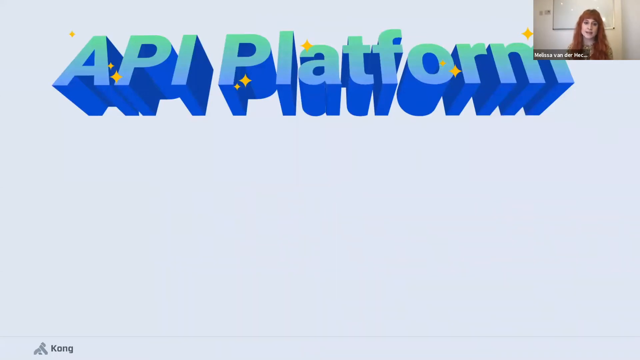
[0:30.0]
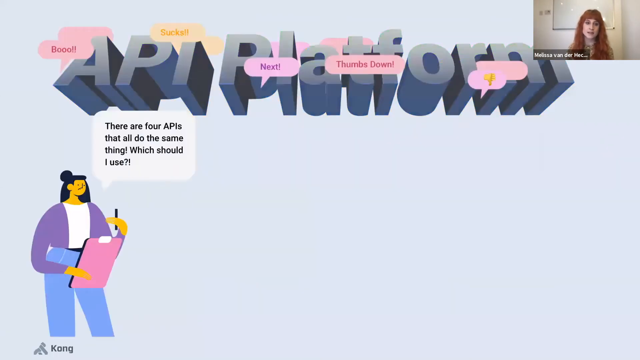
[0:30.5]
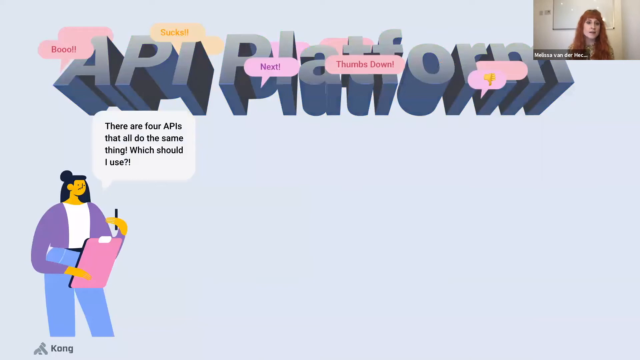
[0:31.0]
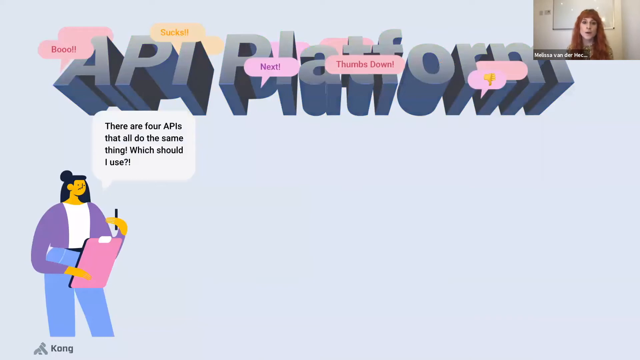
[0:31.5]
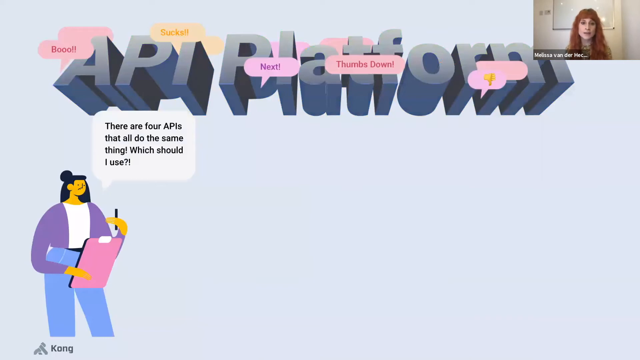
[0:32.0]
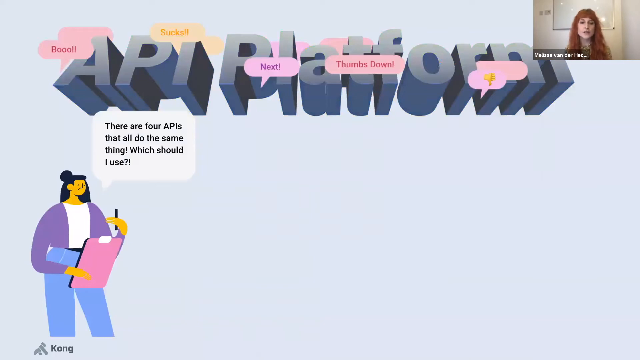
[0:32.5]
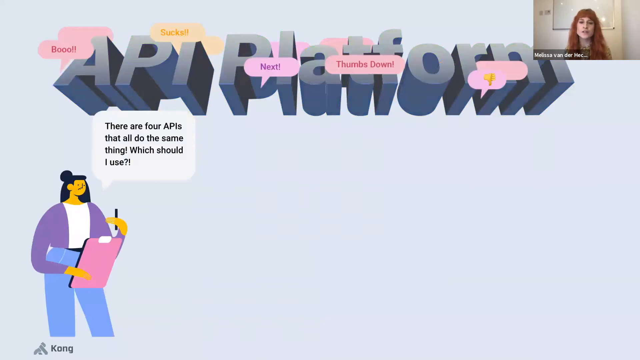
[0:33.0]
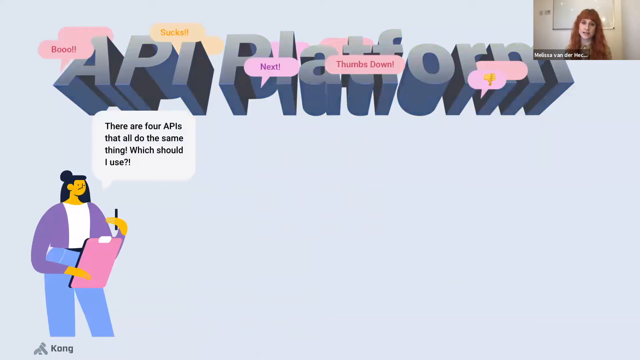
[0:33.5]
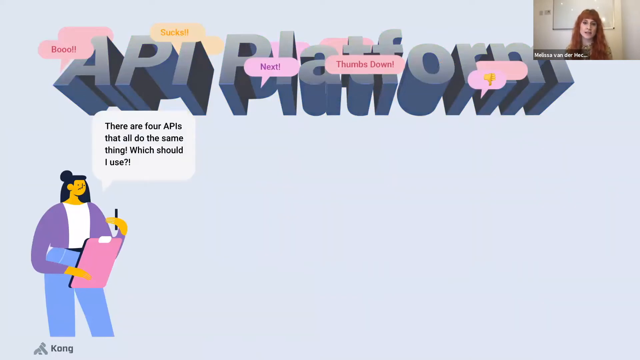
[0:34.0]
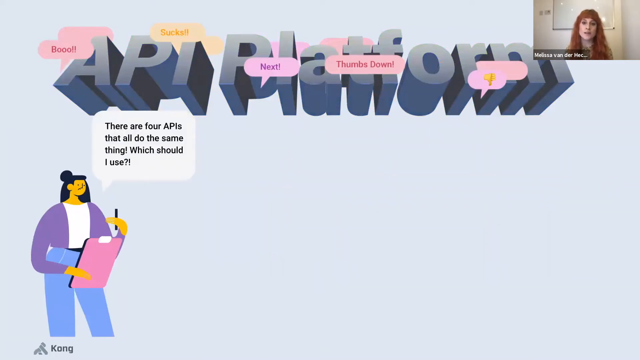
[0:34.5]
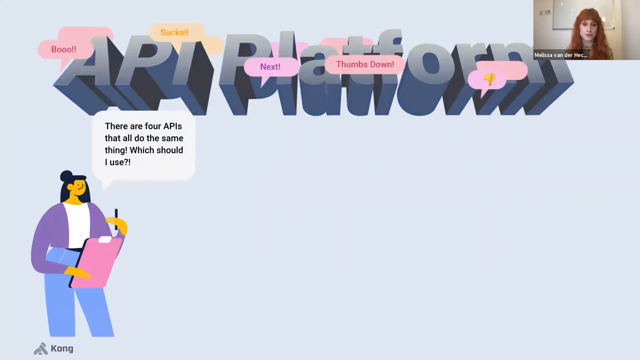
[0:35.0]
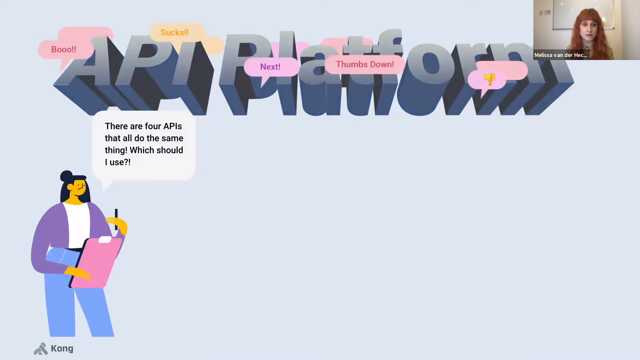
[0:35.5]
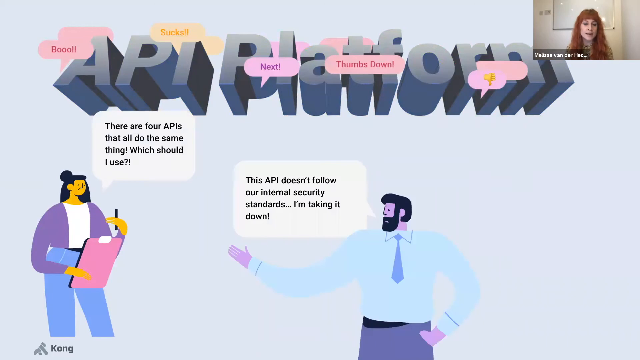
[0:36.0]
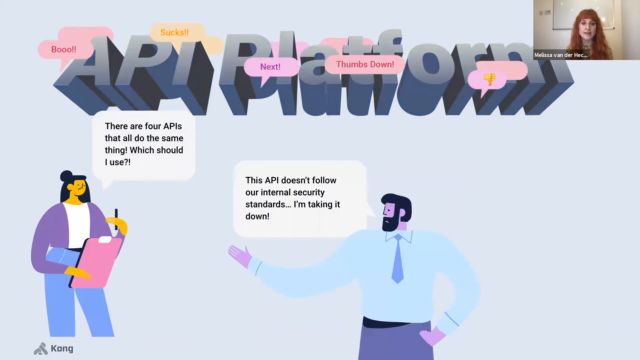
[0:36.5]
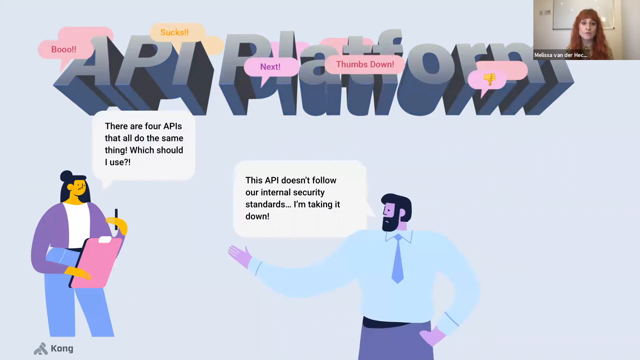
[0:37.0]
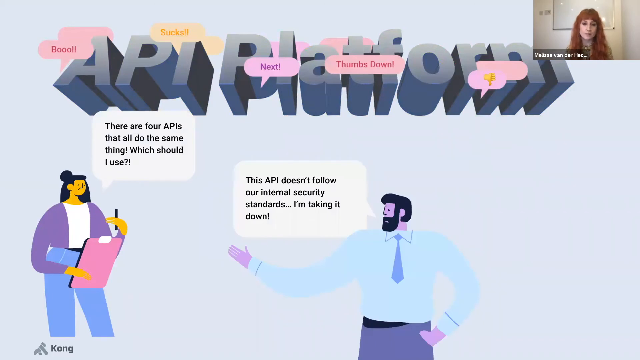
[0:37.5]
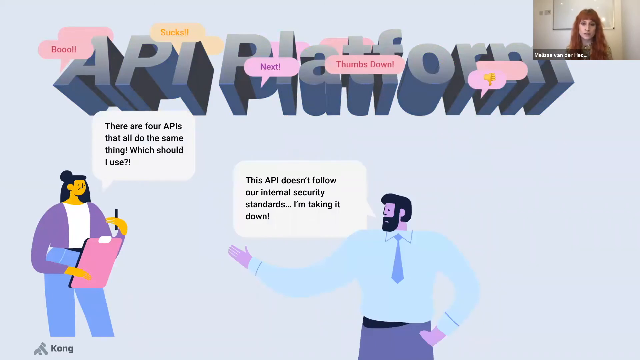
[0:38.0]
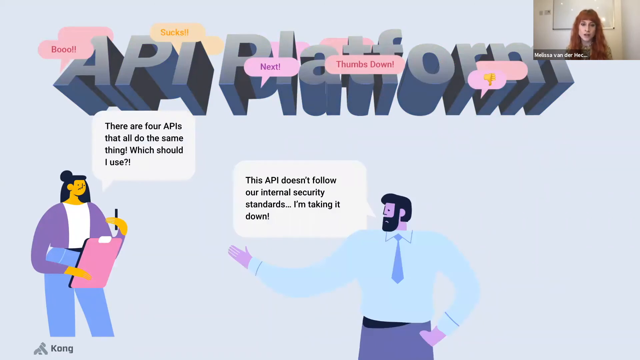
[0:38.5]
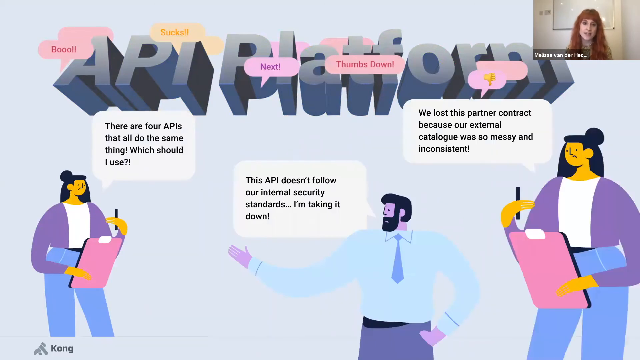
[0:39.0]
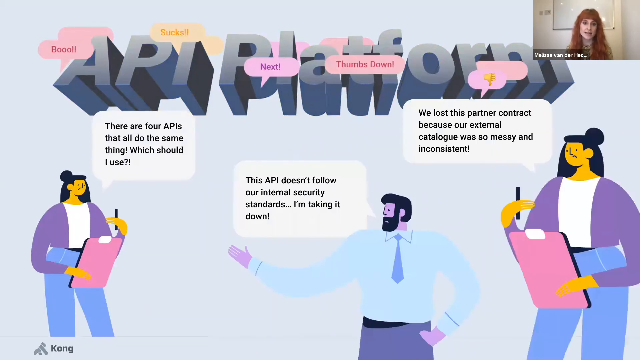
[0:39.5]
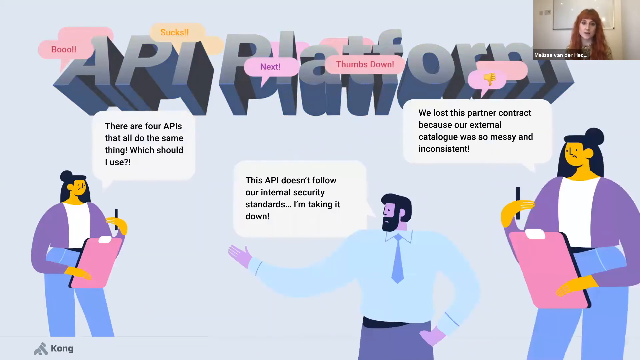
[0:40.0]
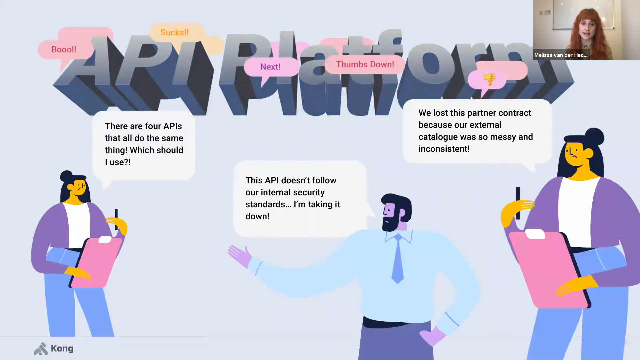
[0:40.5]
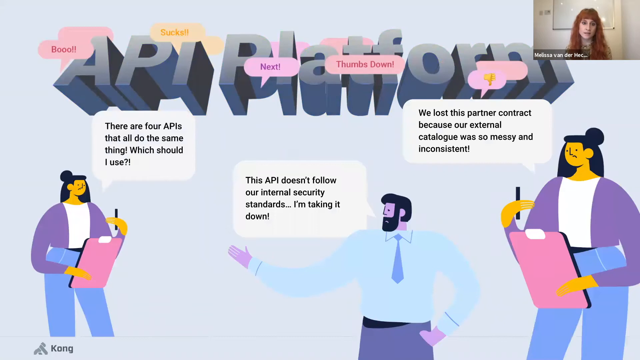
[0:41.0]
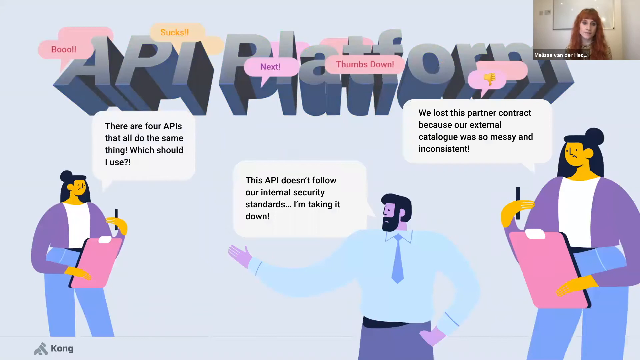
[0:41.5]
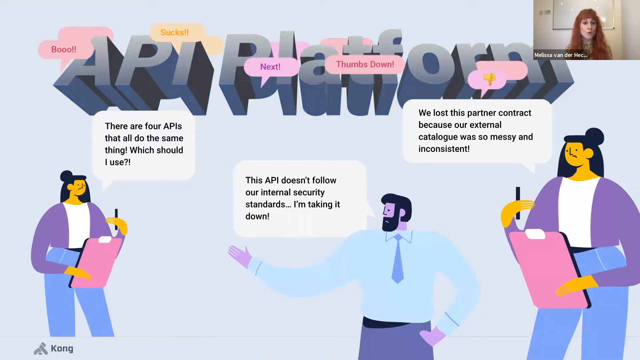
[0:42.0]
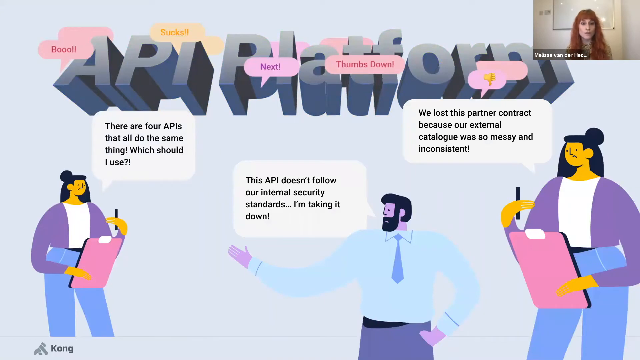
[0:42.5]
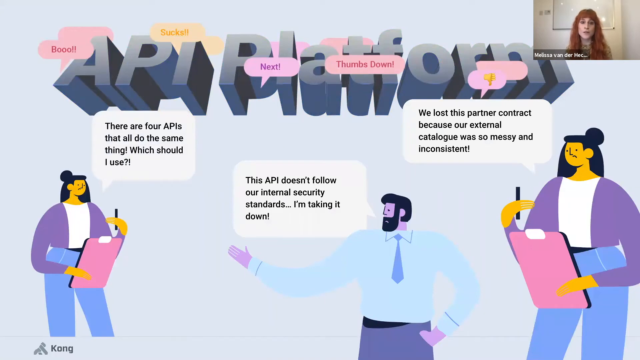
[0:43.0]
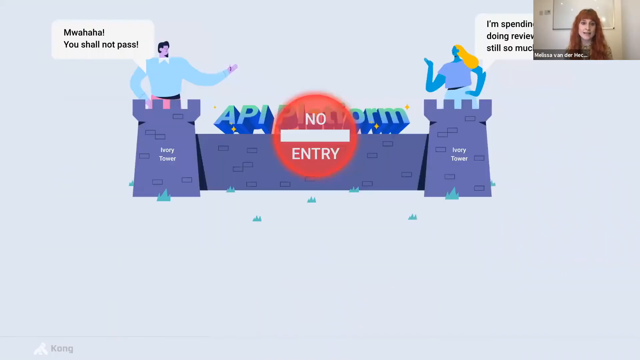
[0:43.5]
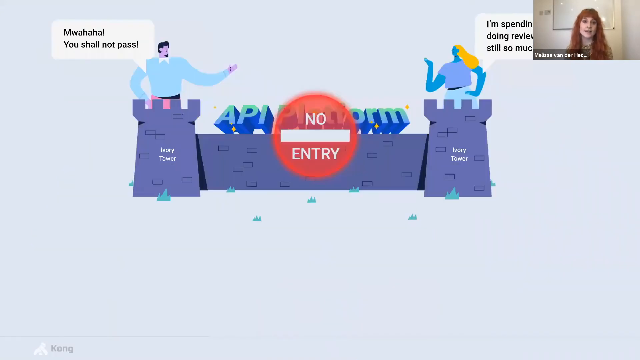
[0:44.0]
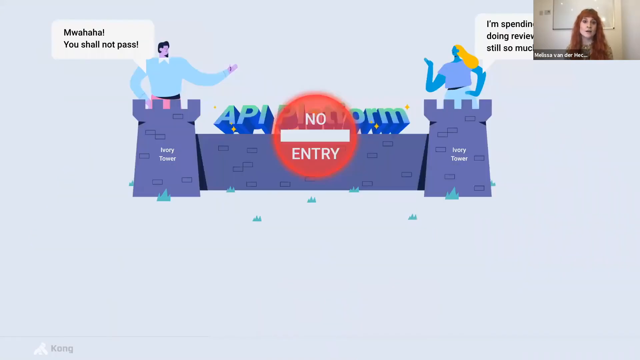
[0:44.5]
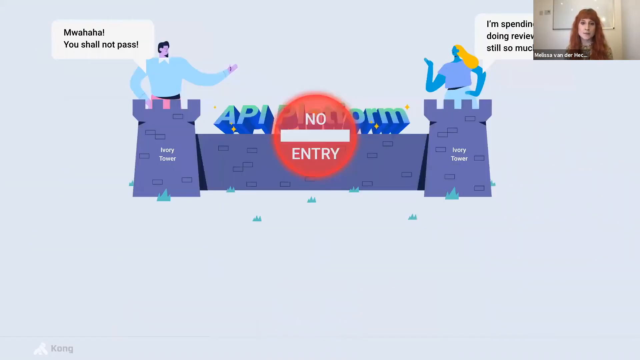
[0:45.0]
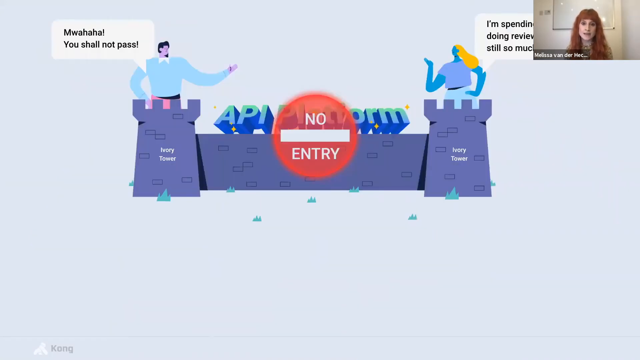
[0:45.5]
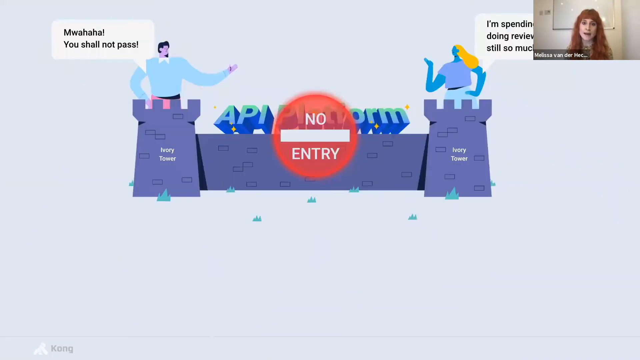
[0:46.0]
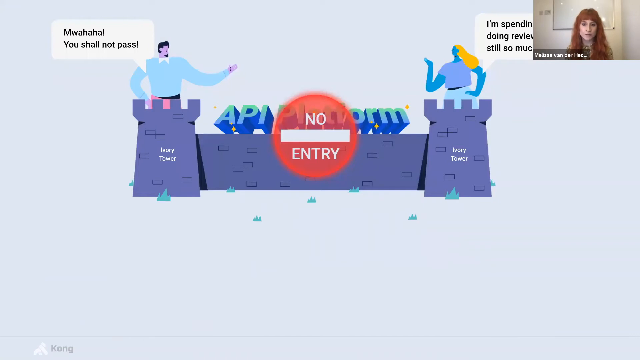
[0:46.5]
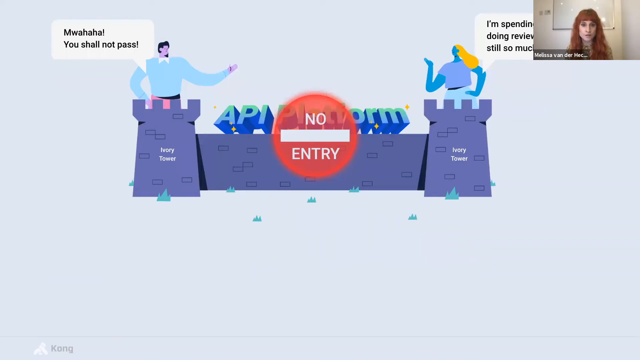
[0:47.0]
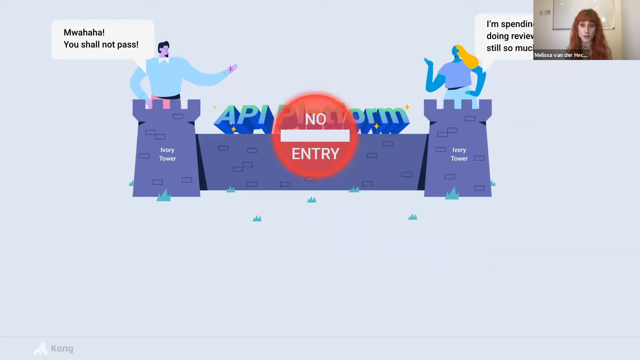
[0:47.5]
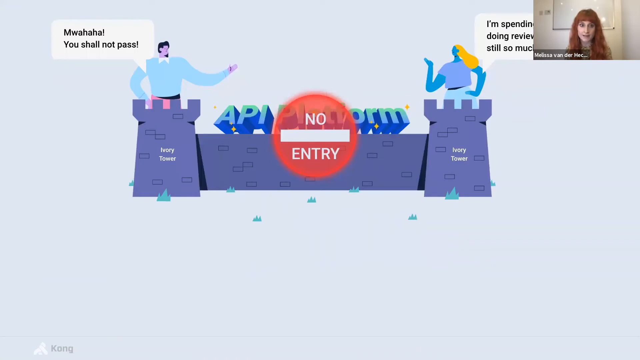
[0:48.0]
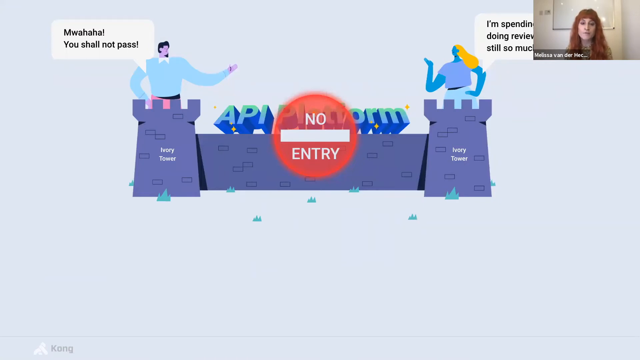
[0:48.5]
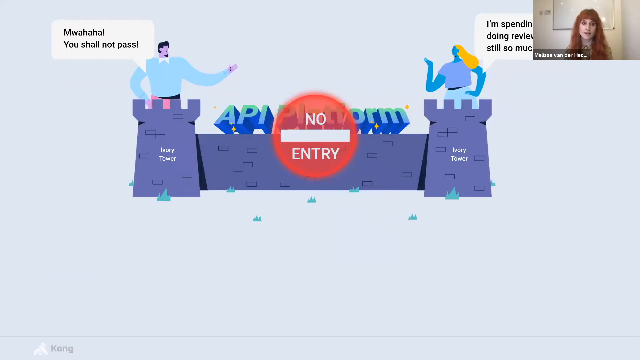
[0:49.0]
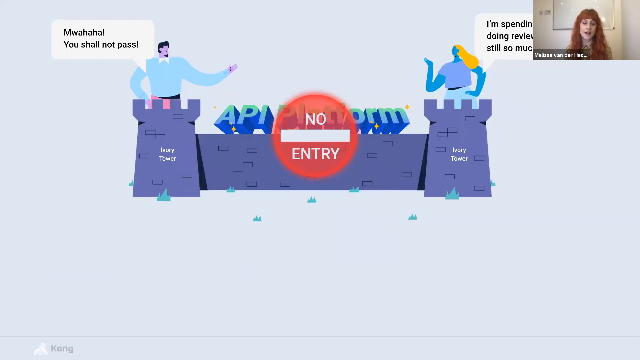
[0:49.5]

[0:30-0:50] Bubbles of text appear over the words "API platform". They are formatted like speech bubbles and say things like "boo", "sucks", "next", "thumbs down", and a thumbs-down emoji. Underneath this text is a vector drawing of a woman with her own speech bubble that says "there are four APIs that all do the same thing. Which should I use?" Next, a vector drawing of a man wearing a tie appears with a speech bubble that says "this API doesn't follow our internal security standards. I'm taking it down." Third, a vector drawing of another woman appears with a speech bubble that says "we lost this partner contract because our external catalog was so messy and inconsistent." The woman in the top right-hand corner continues speaking, her mouth moving and her head bobbing slightly side to side. The slide then changes to an image of a castle with a big red no-entry symbol on top of it. On either side of the castle, two more vector drawings of people appear with speech bubbles: on the left, a man's bubble says "mwahaha, you shall not pass", and on the right, a speech bubble cannot be read because it is blocked by the corner video of the woman.